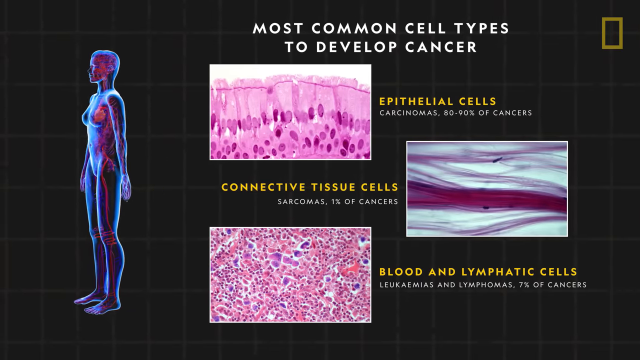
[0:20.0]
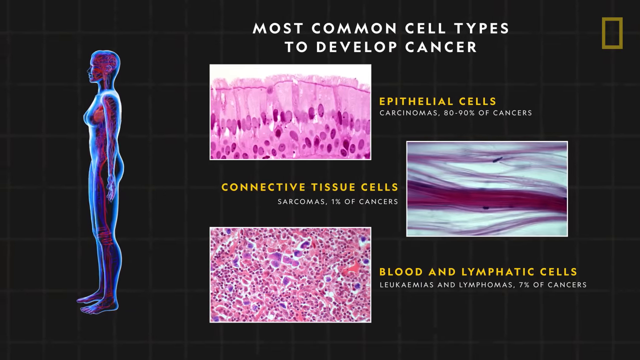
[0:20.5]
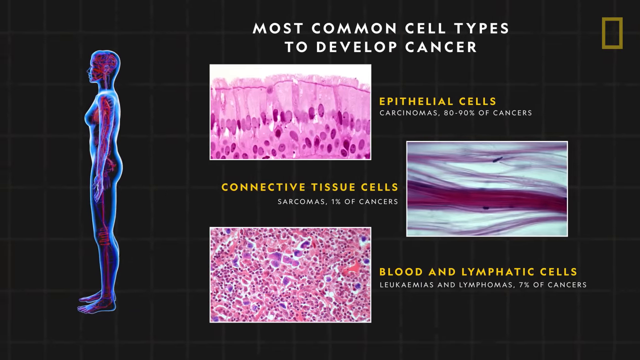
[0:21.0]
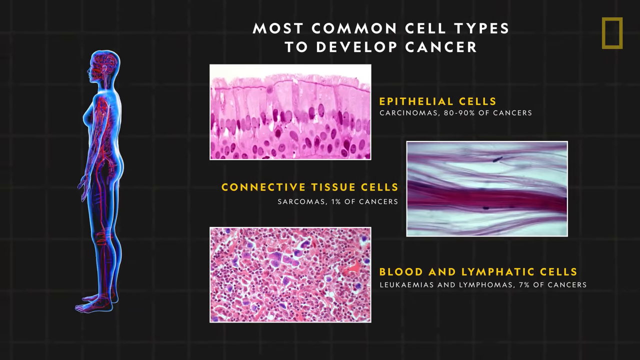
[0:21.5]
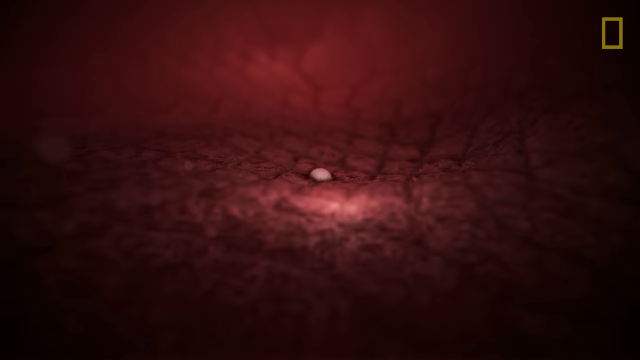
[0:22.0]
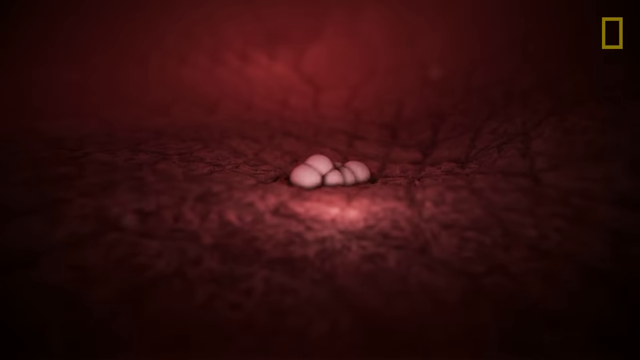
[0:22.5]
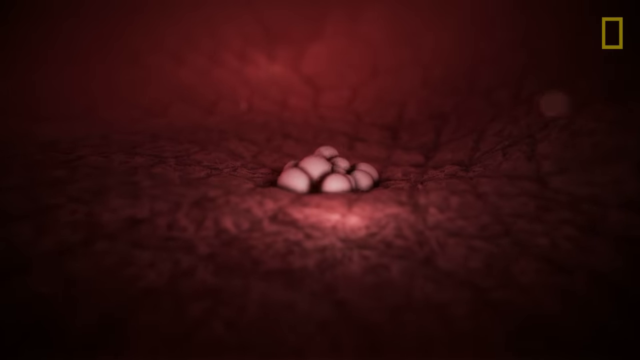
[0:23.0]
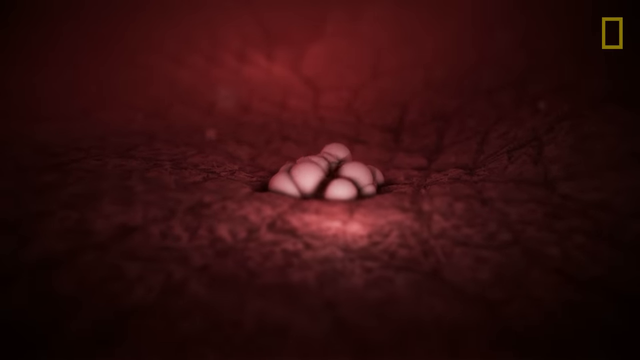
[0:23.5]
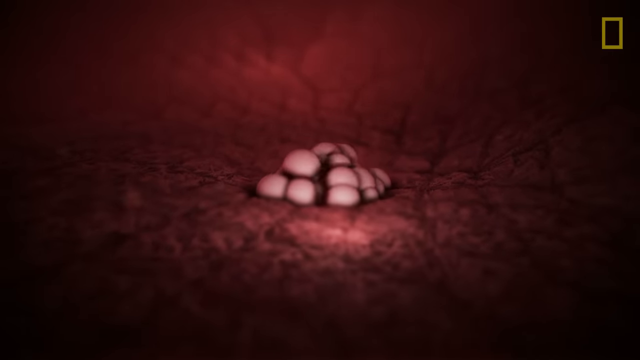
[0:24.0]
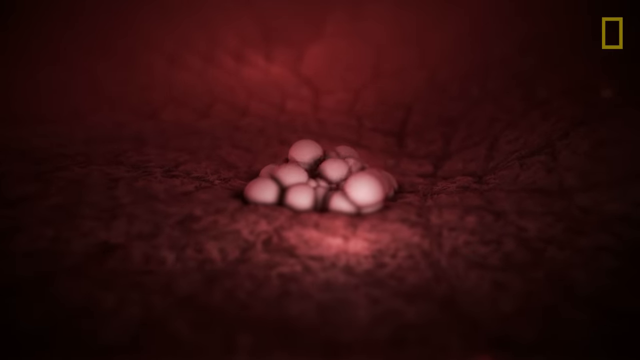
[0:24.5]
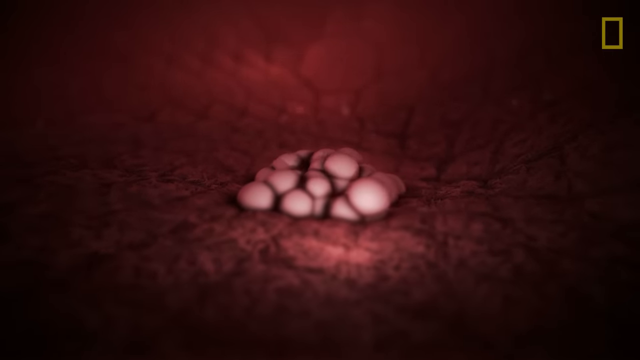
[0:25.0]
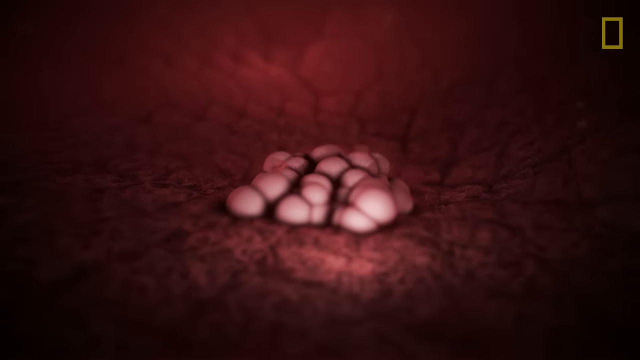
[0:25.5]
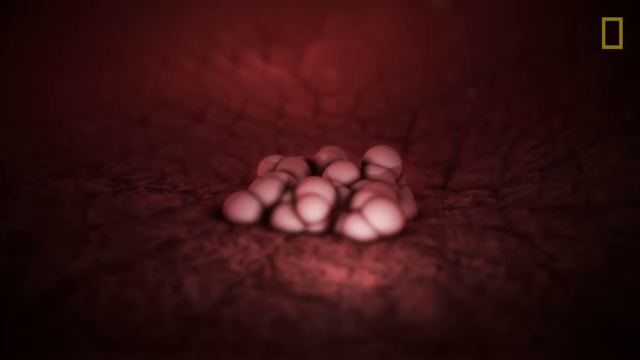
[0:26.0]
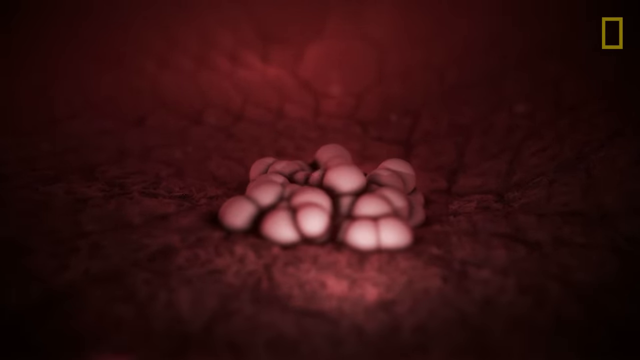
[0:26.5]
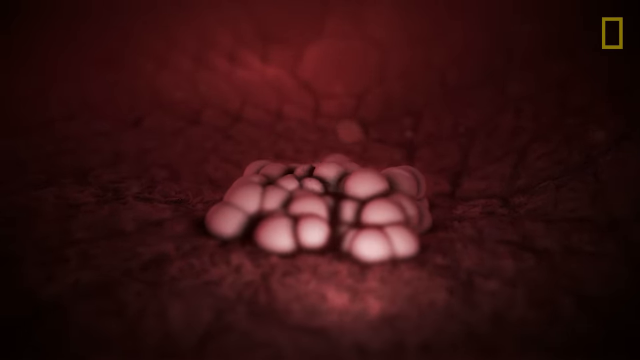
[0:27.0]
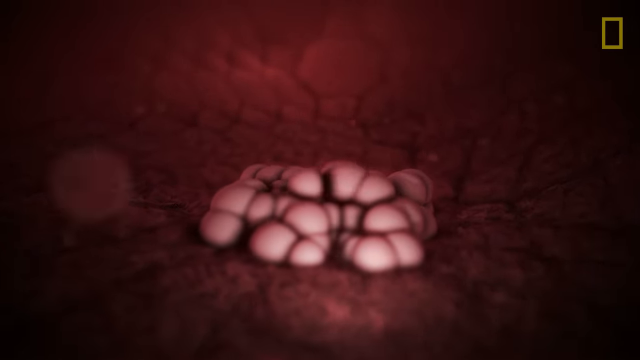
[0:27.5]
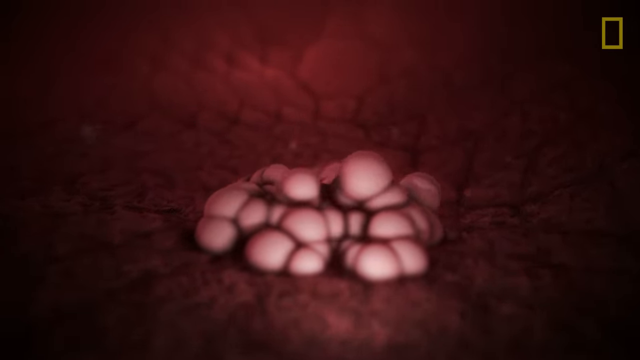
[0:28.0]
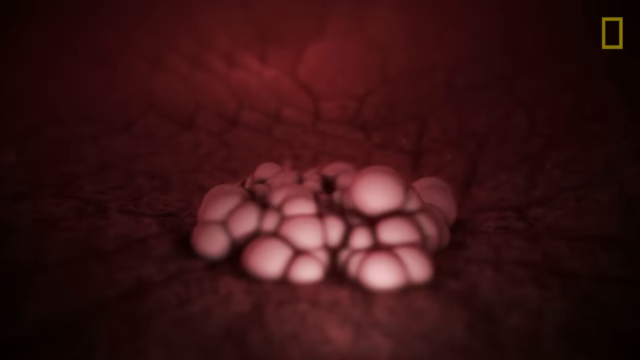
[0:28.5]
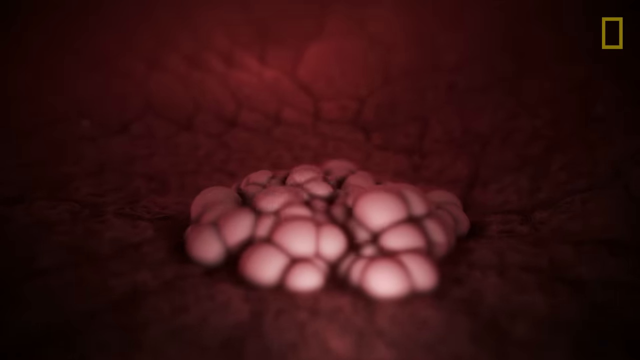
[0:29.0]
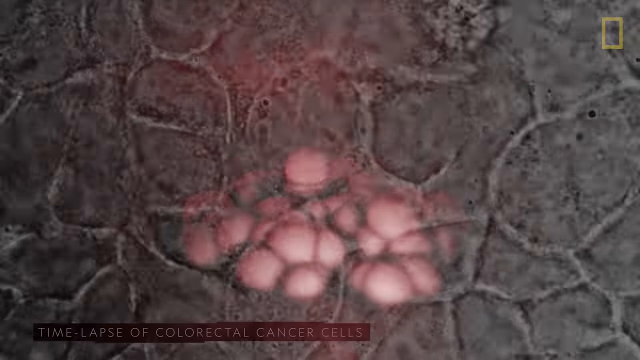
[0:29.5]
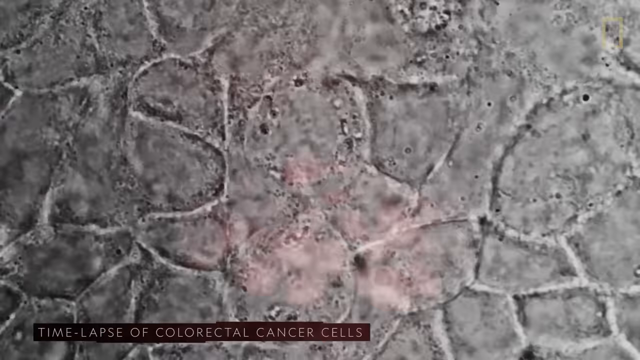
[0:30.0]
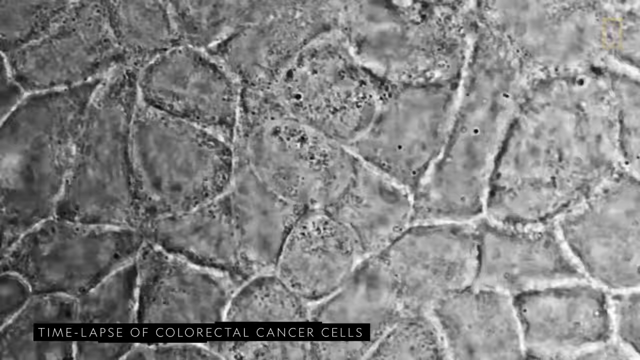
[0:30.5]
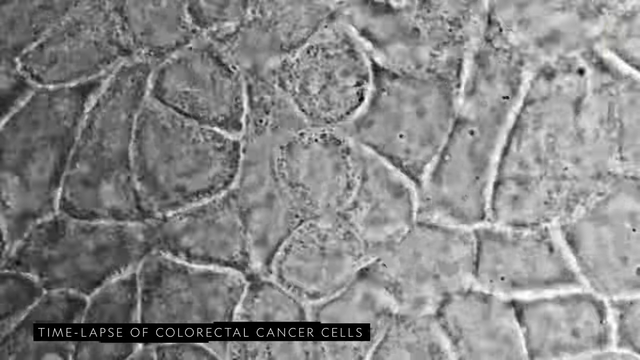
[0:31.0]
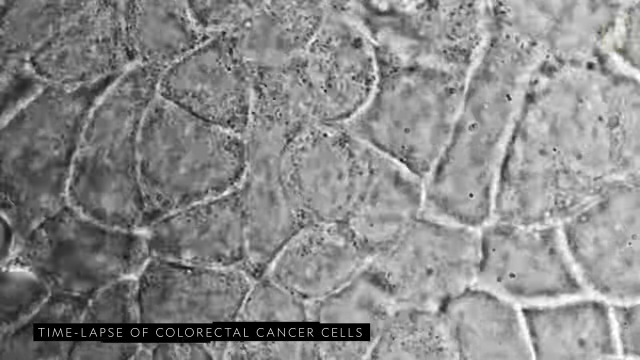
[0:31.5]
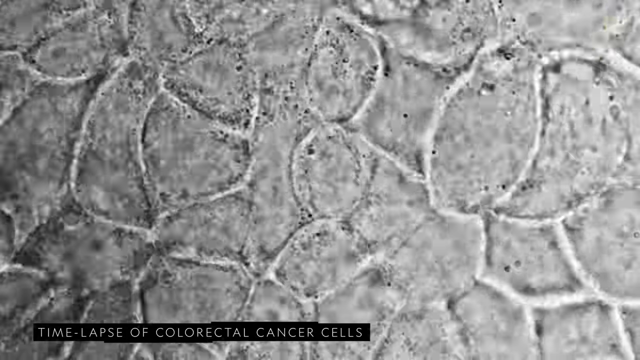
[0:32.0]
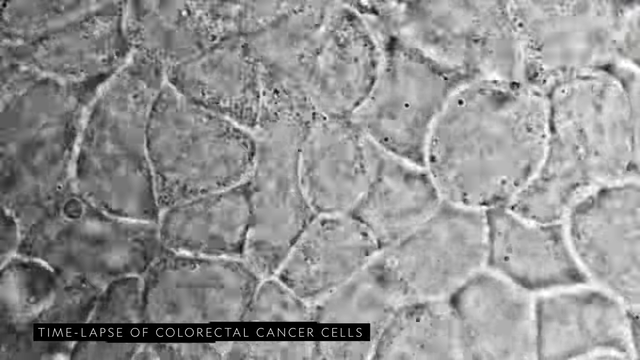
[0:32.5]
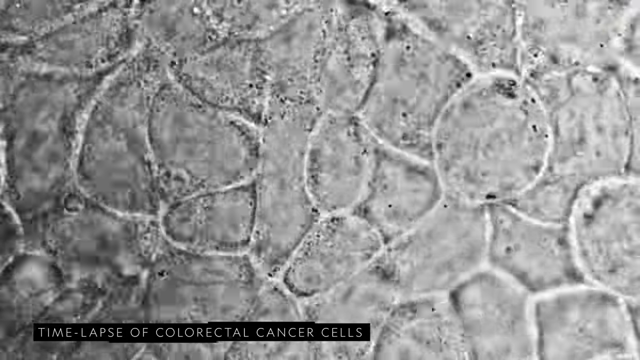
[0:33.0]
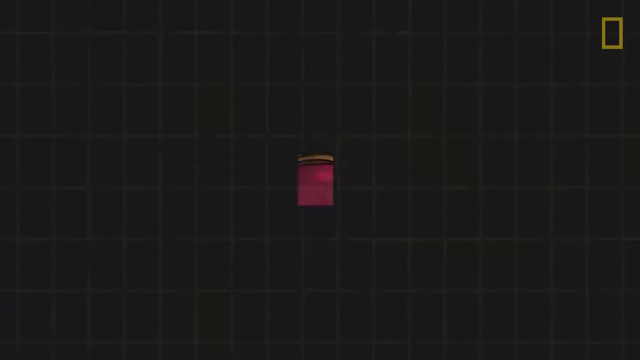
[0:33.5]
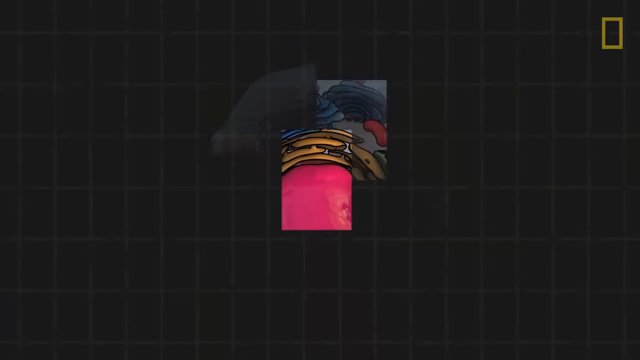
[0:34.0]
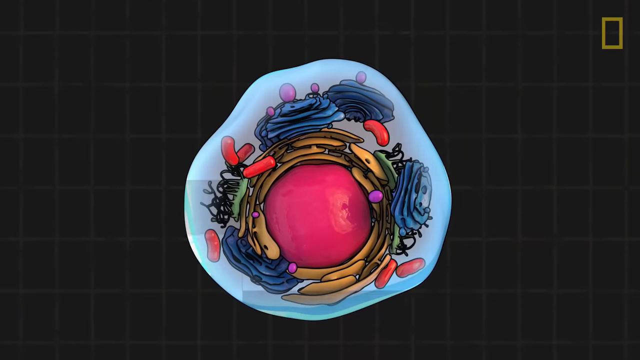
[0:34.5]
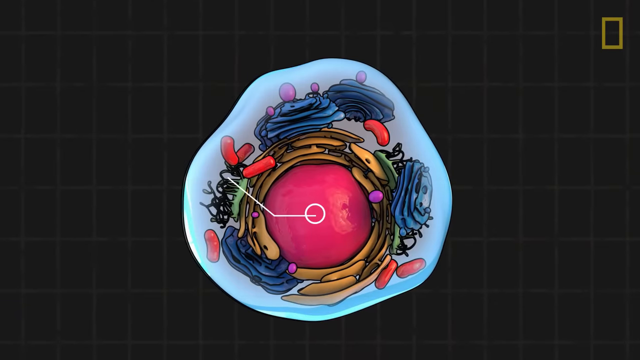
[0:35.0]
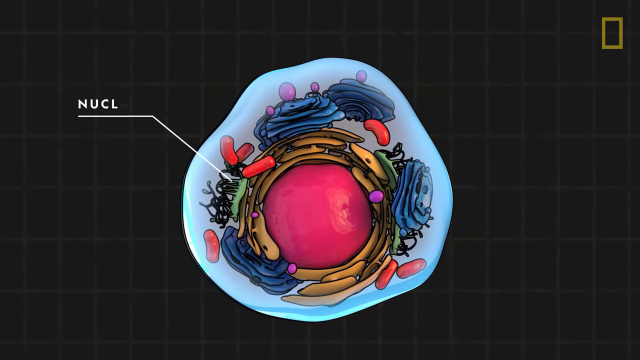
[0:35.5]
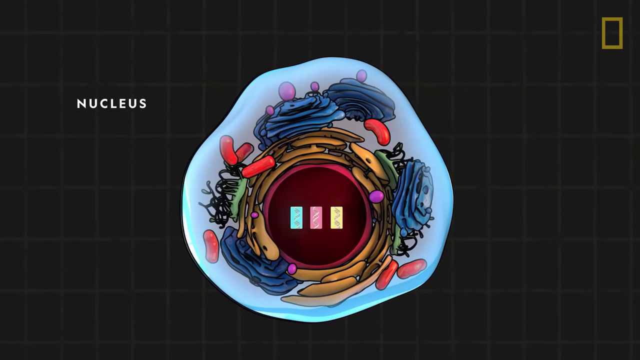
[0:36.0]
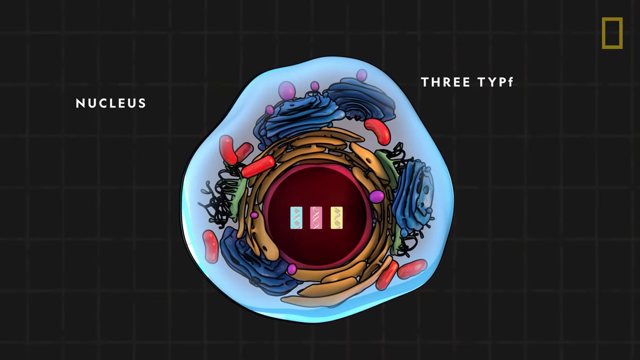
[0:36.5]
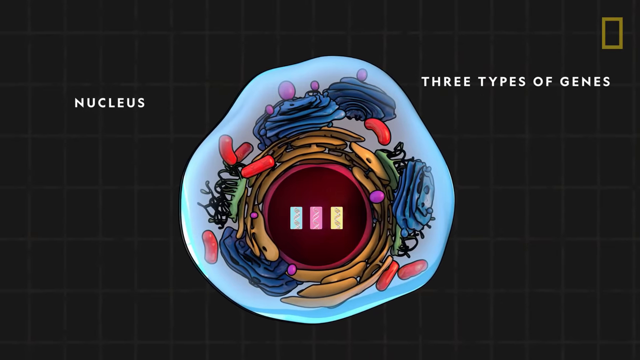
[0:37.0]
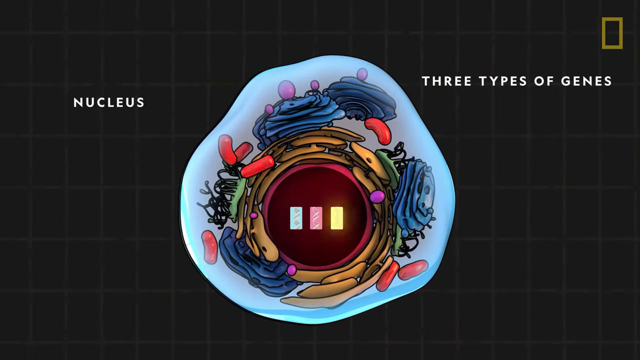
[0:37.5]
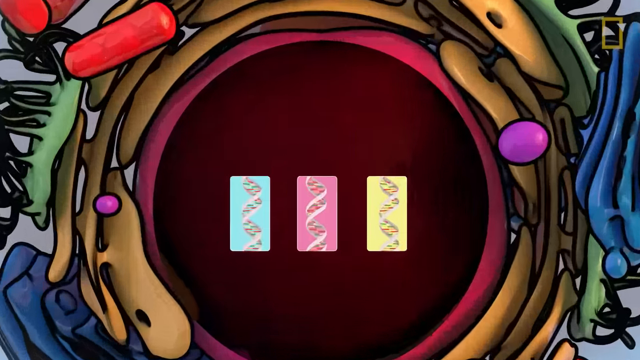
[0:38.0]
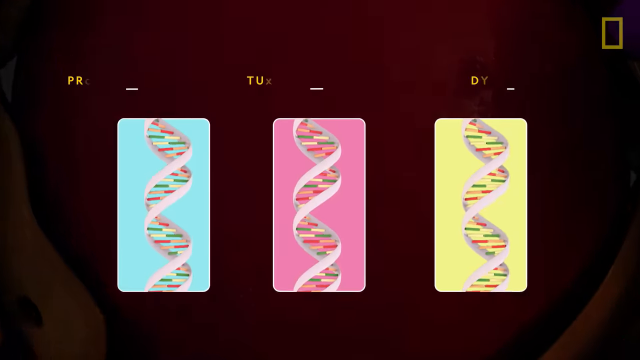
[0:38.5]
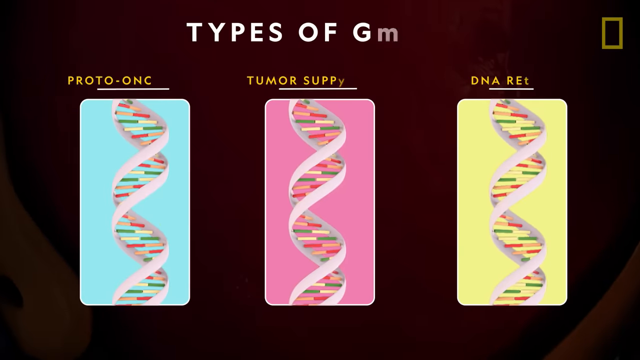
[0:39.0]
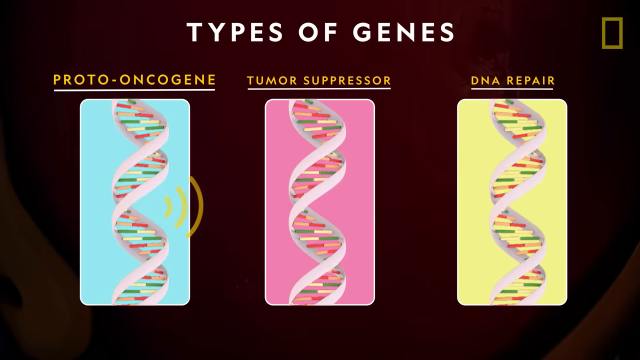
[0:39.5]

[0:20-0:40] The diagram of a person is on the left side: an illustration of the outline of the body with internal organs, and the diagram revolves. On the right the title reads "most common cell types to develop cancer." Below it are three rectangular images with labels next to them. The top label reads "epithelial cells," with an apparent sub-label "carcinomas, 80-90 percent of cancers"; its image is pink, seemingly darker pink and light pink oblong-ish shapes. The second image is labeled "connective tissue cells" with the sub-label "sarcomas, one percent of cancer," and shows lines and bars in darkish pink on a light gray background. The bottom image is labeled "blood and lymphatic cells," with smaller text reading "leukemias and lymphomas, seven percent of cancers." The screen then shifts to what looks like another computer-generated image of a cell, which is red, and white bubbles keep appearing and form a cluster.